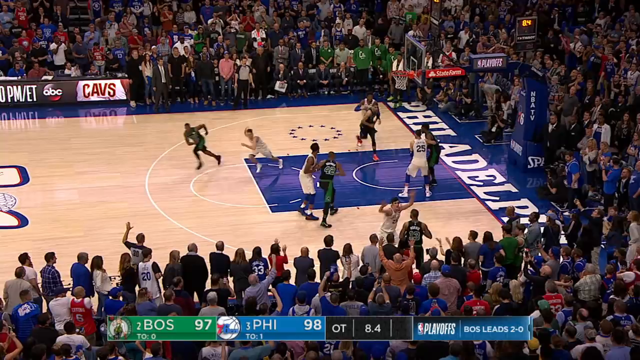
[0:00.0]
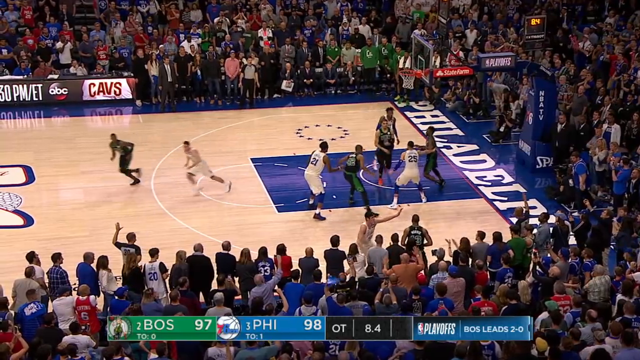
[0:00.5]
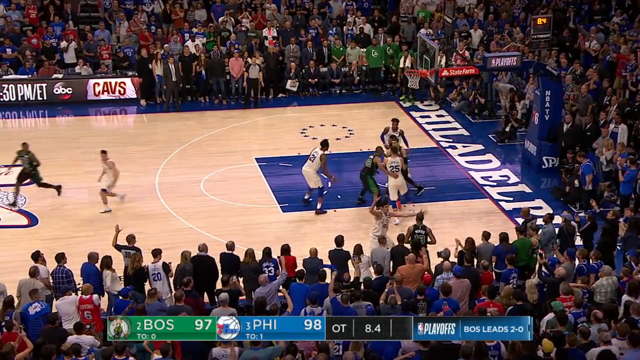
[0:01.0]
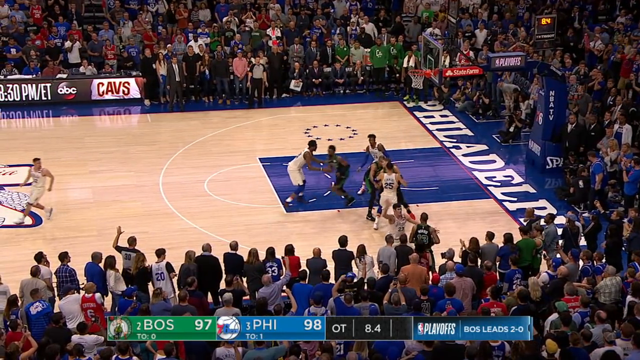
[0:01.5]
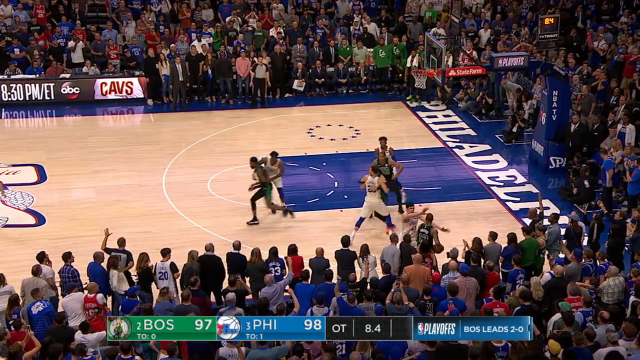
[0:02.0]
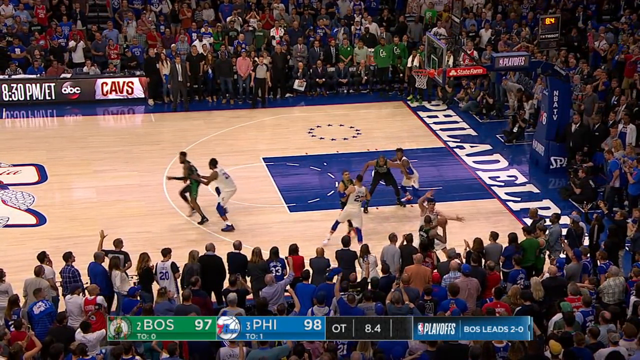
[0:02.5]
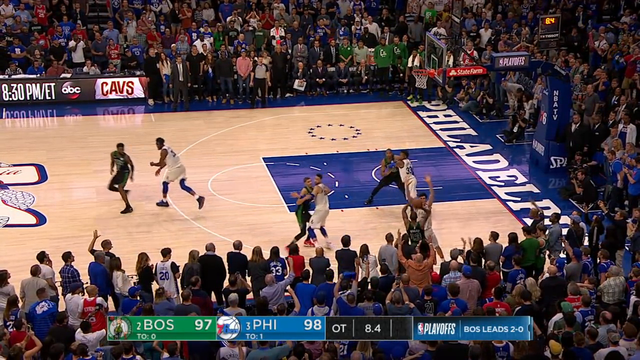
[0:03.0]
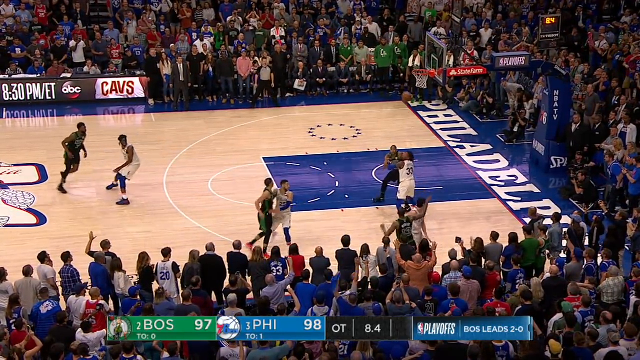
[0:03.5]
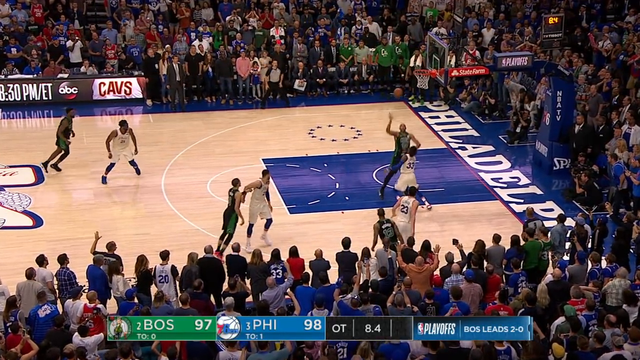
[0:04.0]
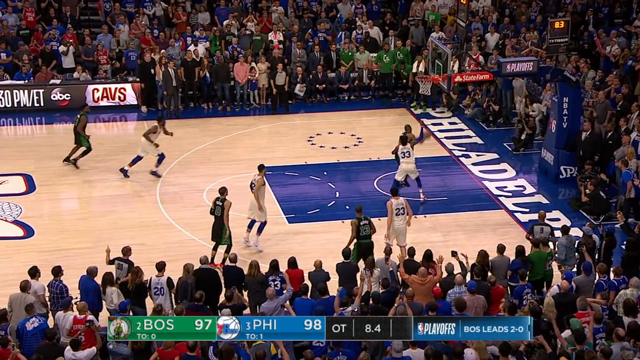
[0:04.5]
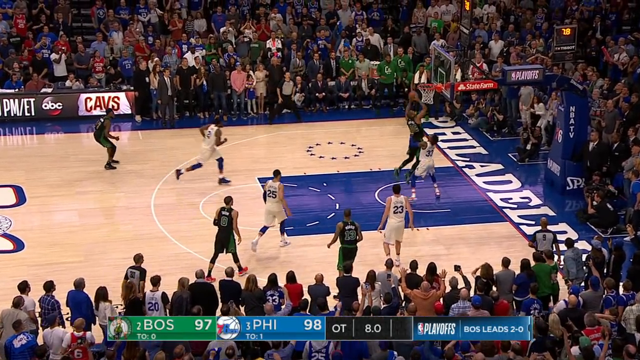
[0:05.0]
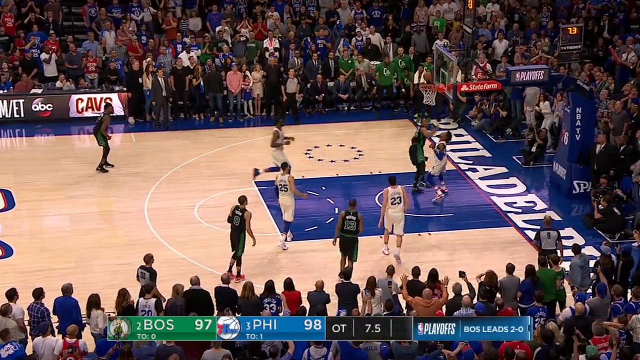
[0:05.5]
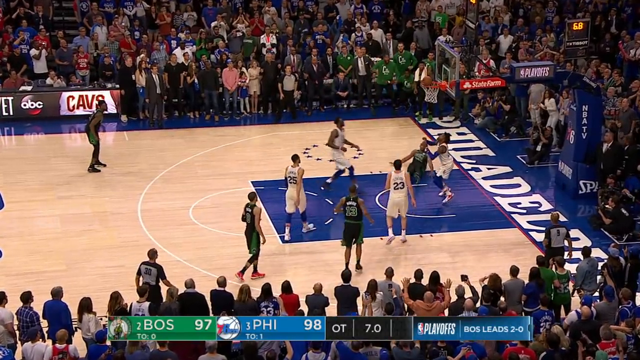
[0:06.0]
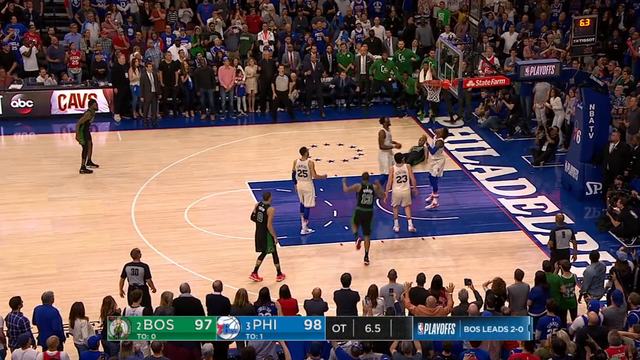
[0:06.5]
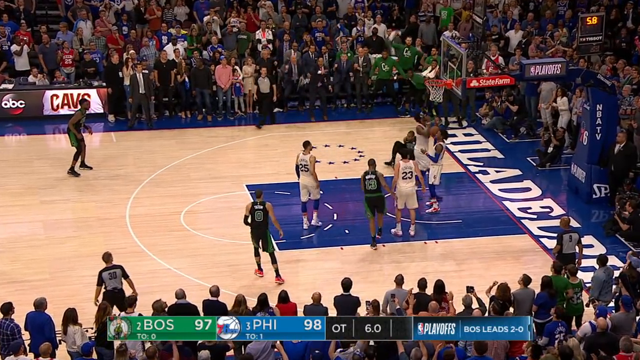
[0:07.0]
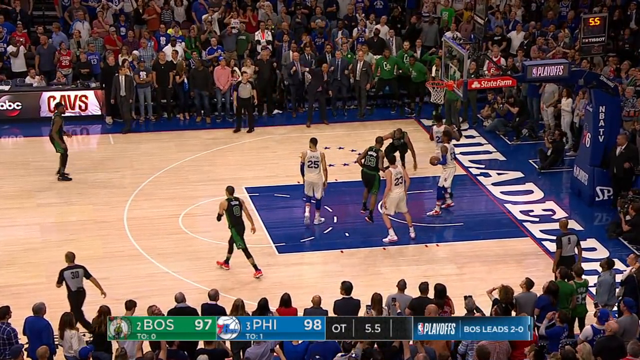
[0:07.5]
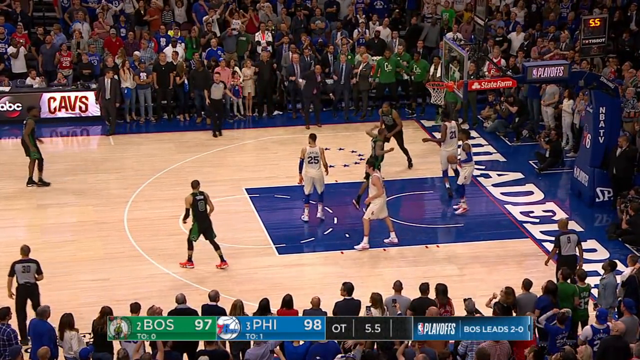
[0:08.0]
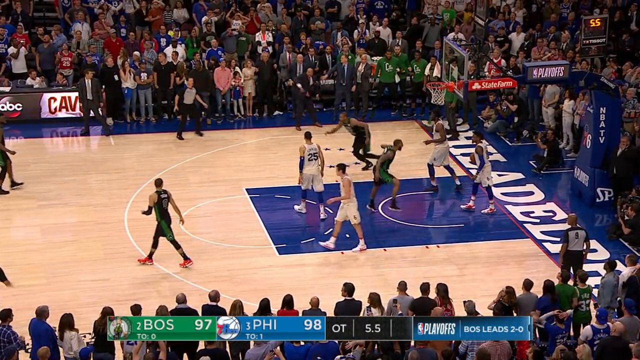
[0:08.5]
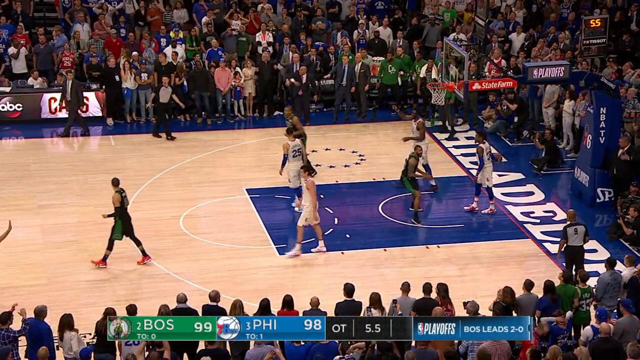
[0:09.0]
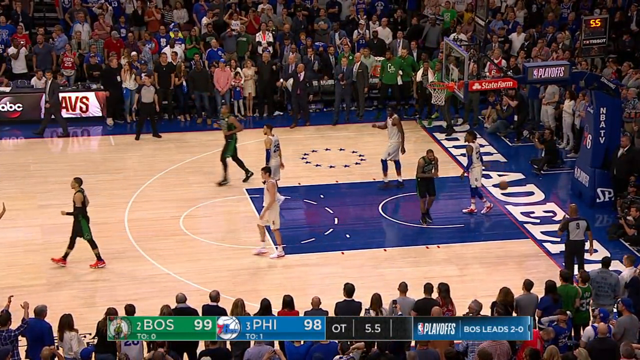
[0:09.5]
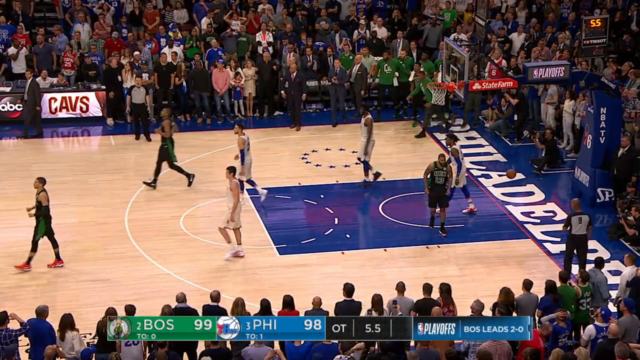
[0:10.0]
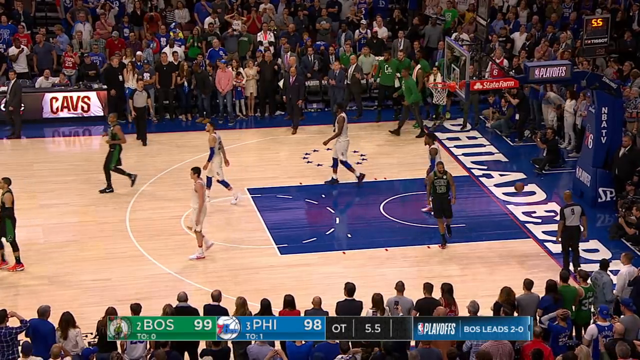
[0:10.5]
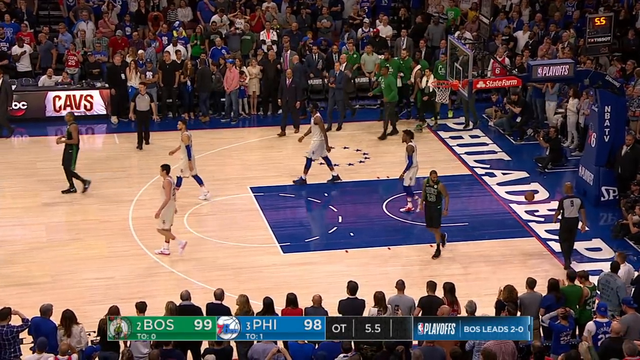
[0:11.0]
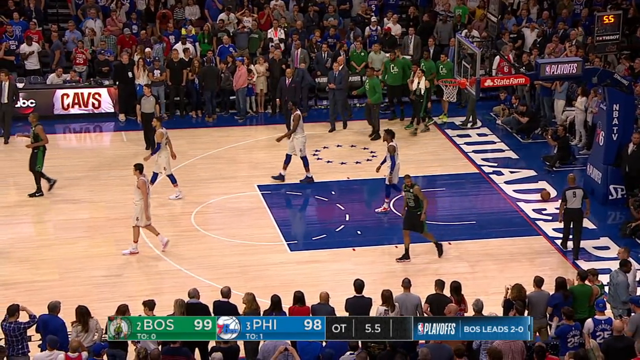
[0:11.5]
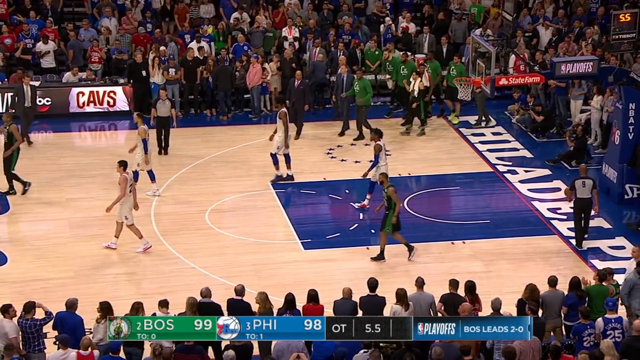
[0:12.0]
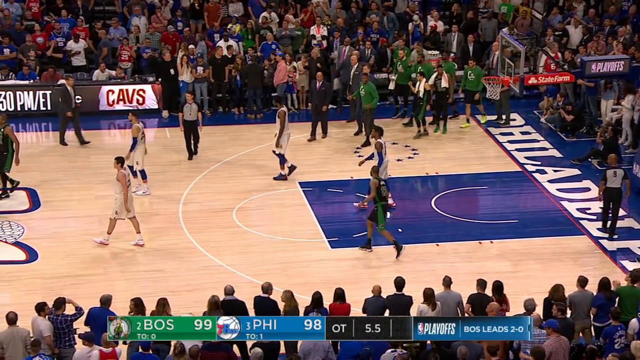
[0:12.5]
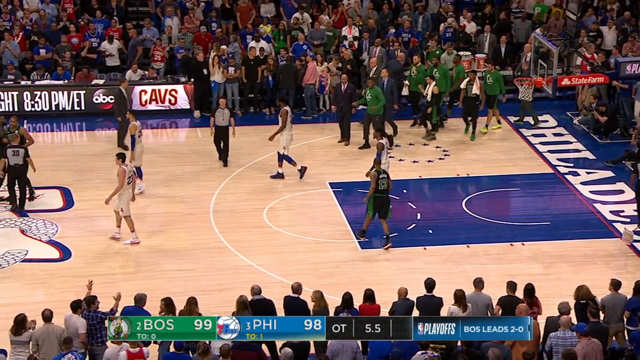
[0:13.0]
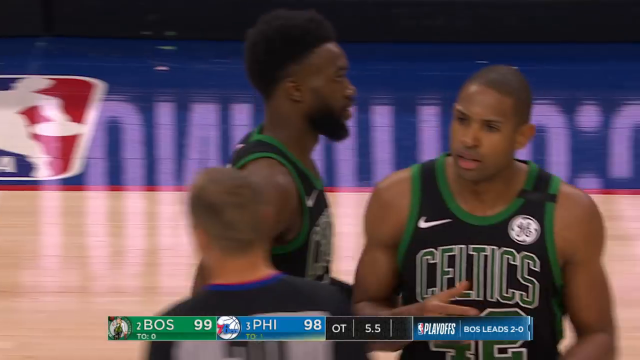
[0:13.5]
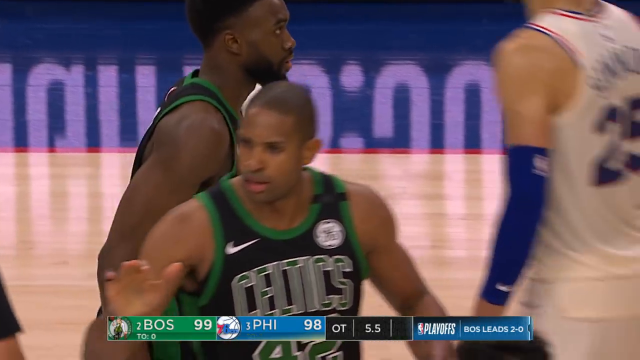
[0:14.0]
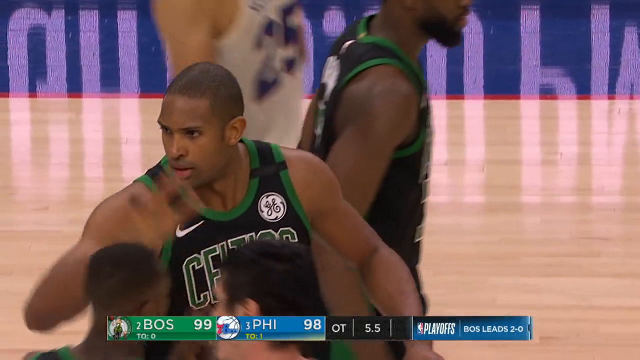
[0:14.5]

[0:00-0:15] Two teams appear to be playing a basketball game, seemingly the Boston Celtics against a Philadelphia team. Philadelphia is playing on its home court: large Philadelphia letters are on the right side of the court, where the teams currently are, the court is partially blue, and part of a logo is visible in the middle of the court. A Celtics player scores from the paint with an awkward shot: he jumps up, makes the shot, and then falls down in a kind of cartoonish dive. The ball dribbles off, and he quickly gets up to celebrate; it almost looks as if he is acting like someone pushed him down. The Celtics celebrate, and the camera zooms in on the player who took the shot as he claps for his teammates.